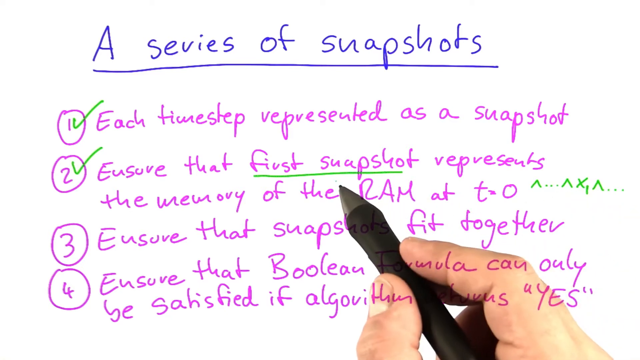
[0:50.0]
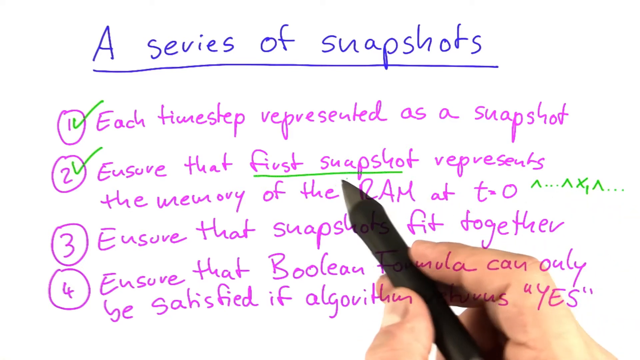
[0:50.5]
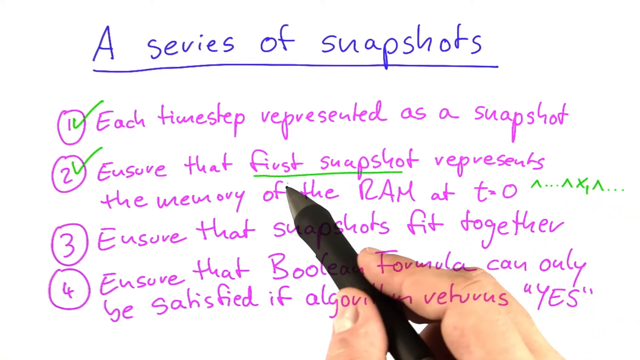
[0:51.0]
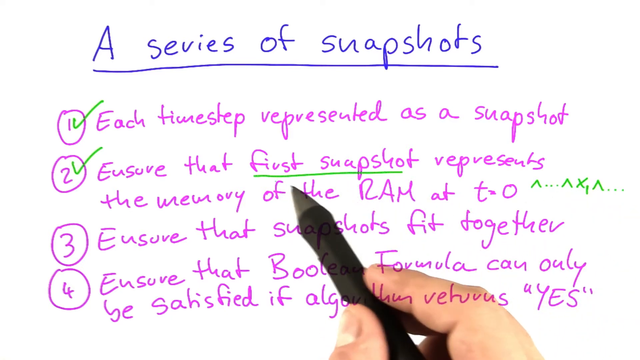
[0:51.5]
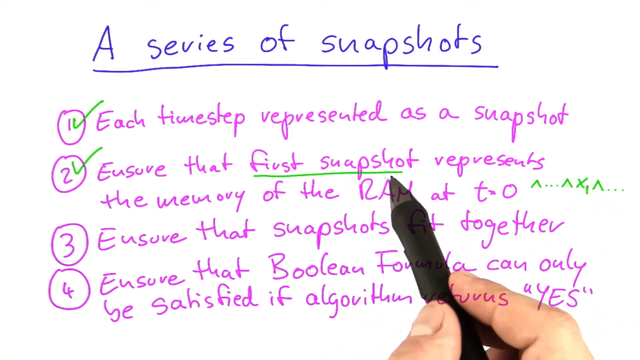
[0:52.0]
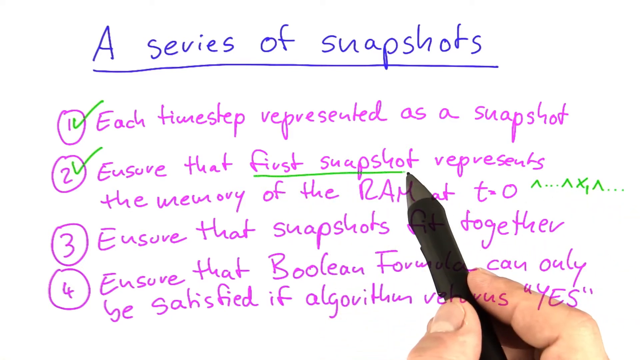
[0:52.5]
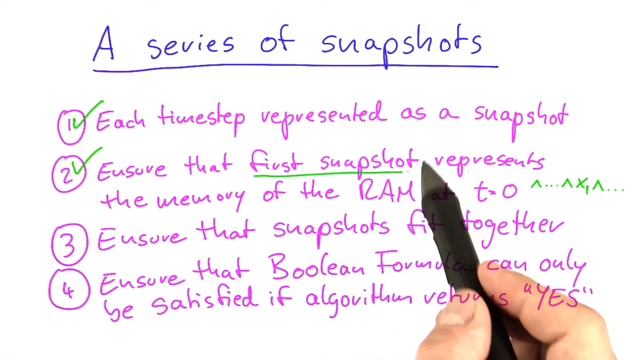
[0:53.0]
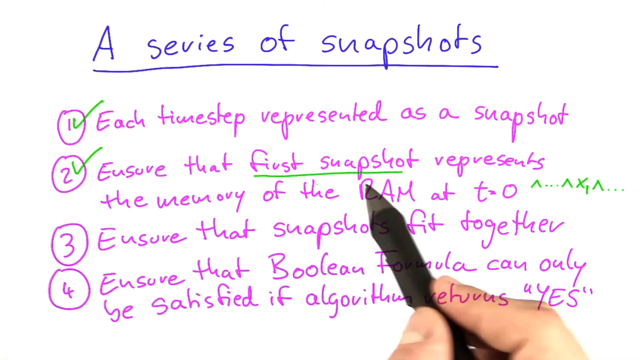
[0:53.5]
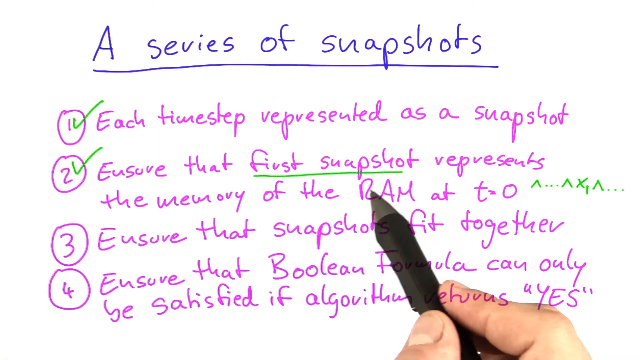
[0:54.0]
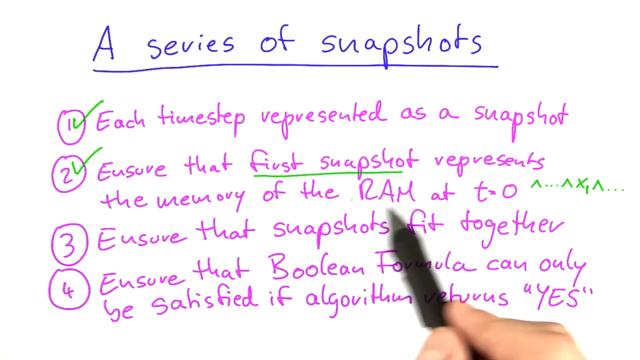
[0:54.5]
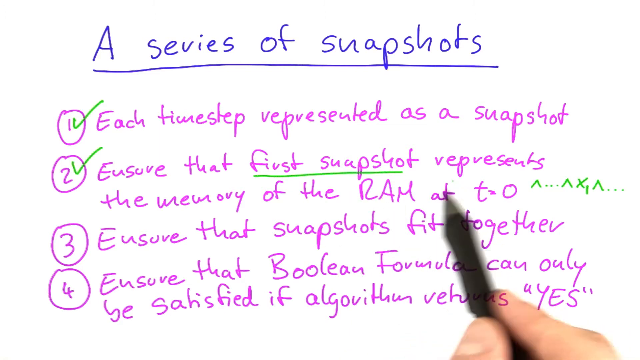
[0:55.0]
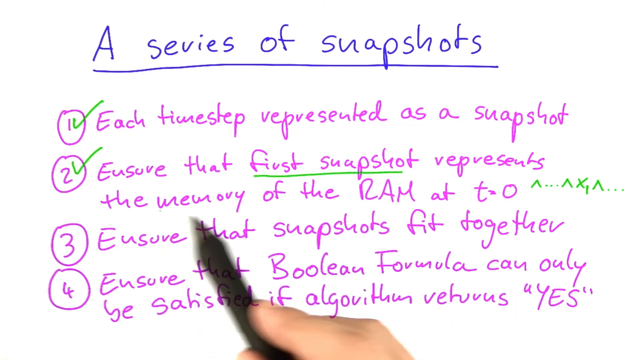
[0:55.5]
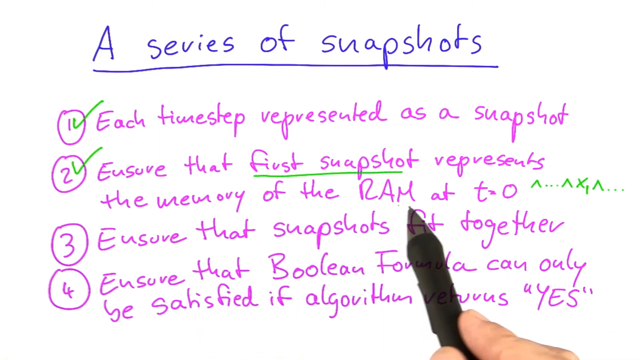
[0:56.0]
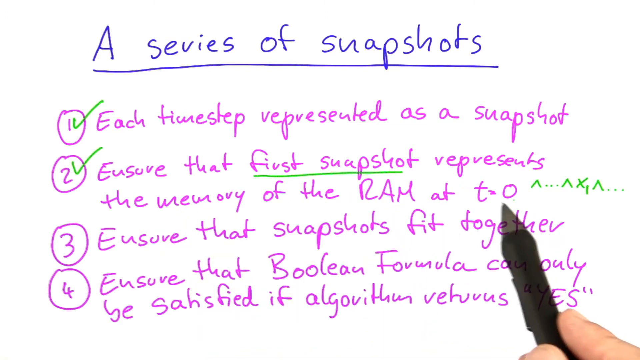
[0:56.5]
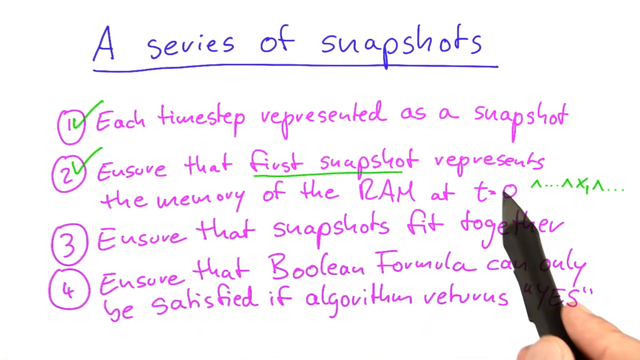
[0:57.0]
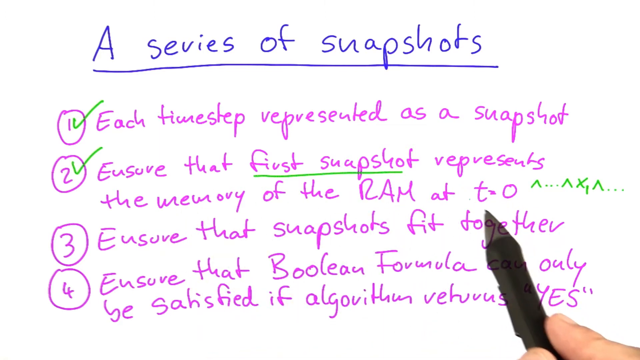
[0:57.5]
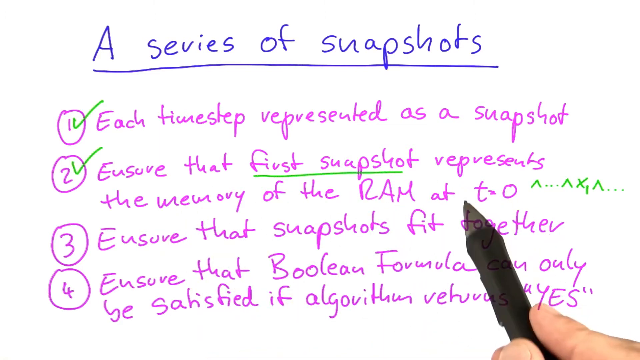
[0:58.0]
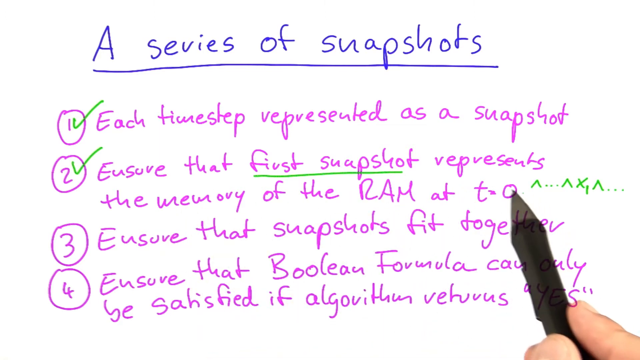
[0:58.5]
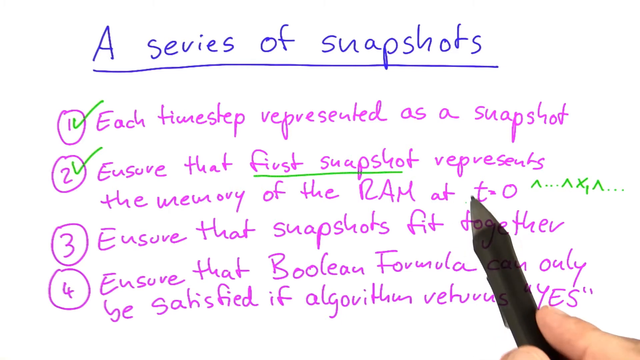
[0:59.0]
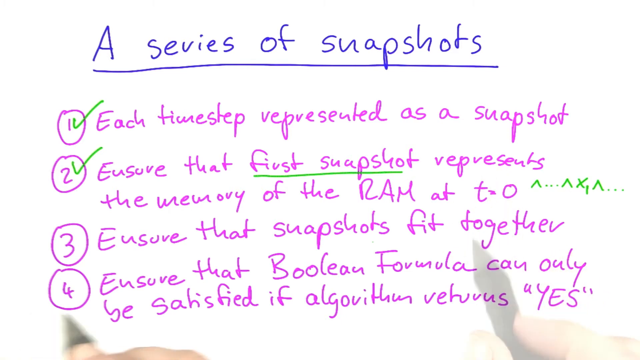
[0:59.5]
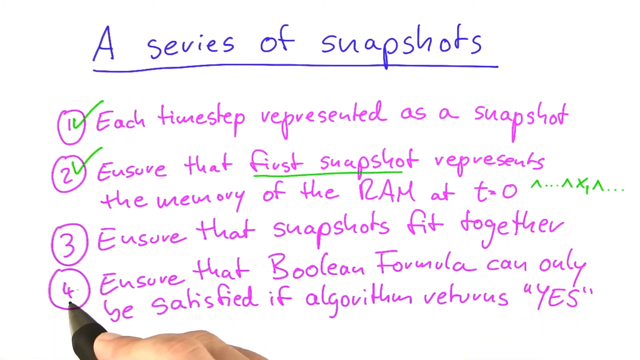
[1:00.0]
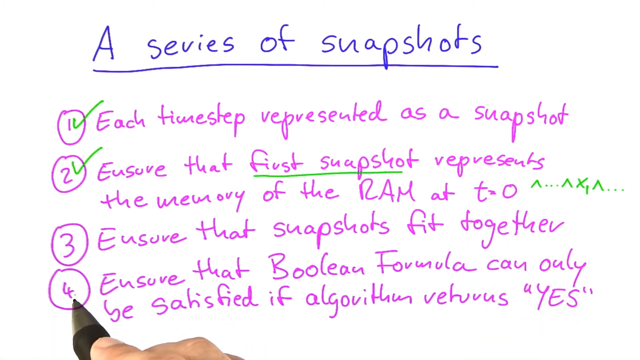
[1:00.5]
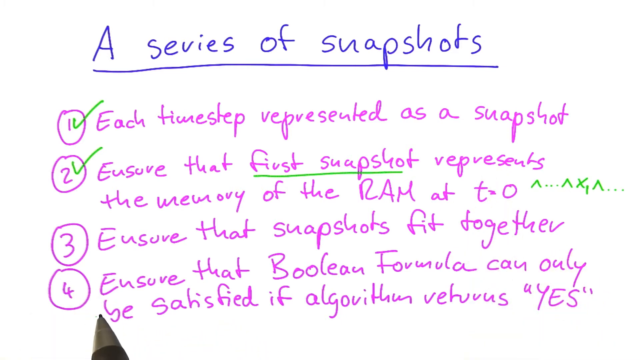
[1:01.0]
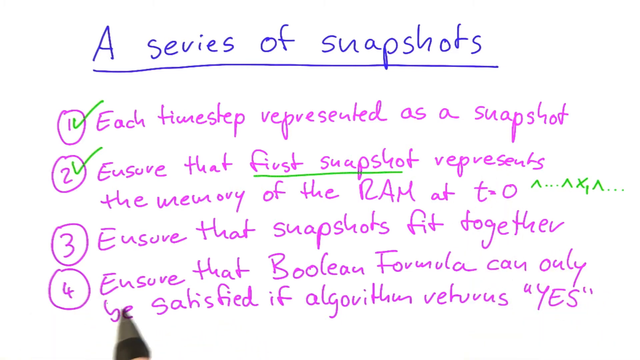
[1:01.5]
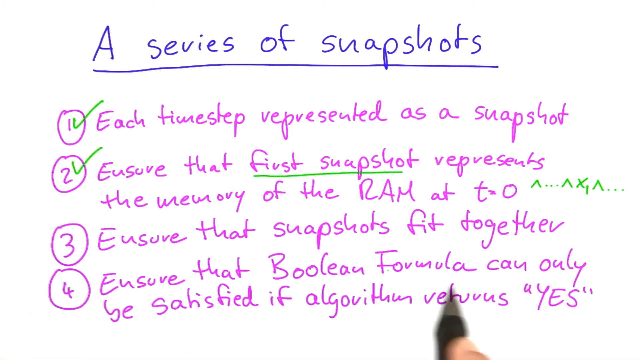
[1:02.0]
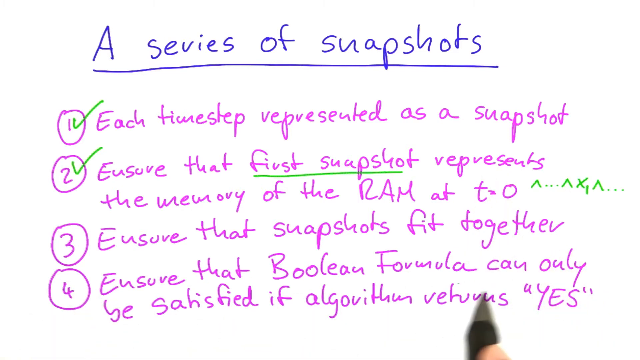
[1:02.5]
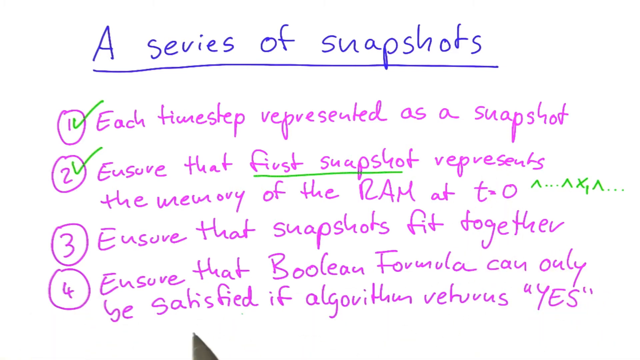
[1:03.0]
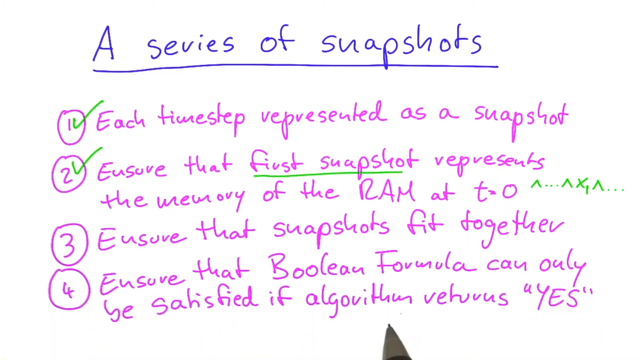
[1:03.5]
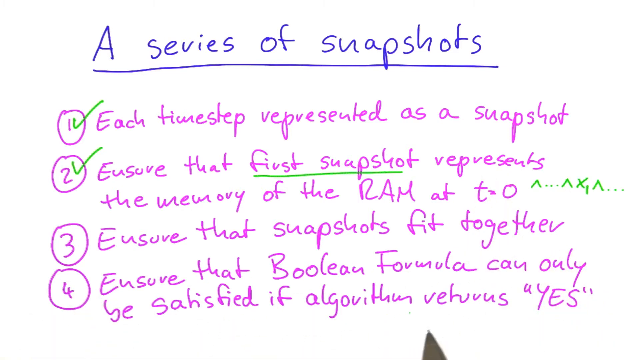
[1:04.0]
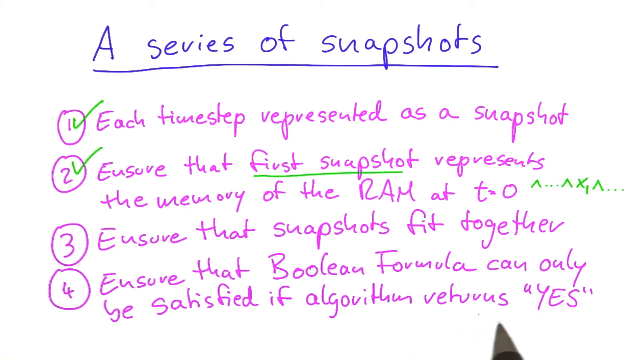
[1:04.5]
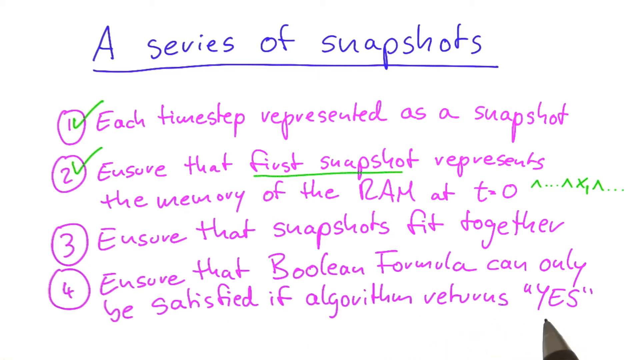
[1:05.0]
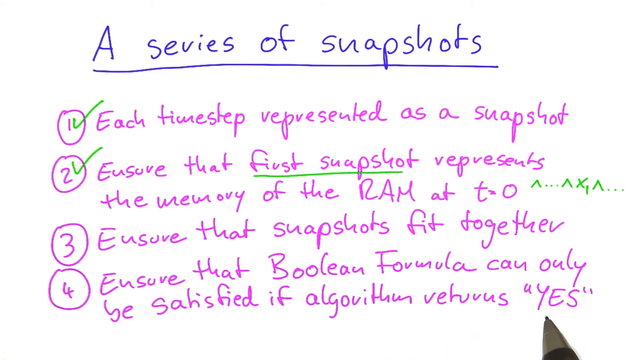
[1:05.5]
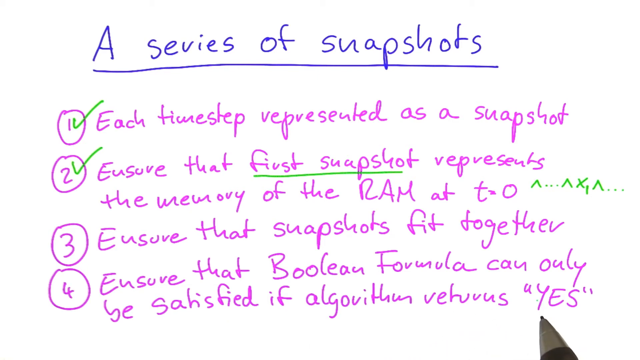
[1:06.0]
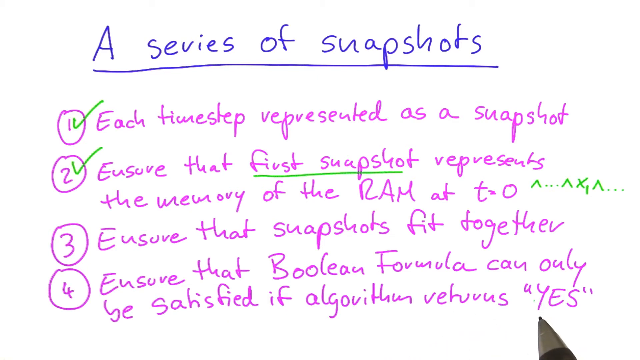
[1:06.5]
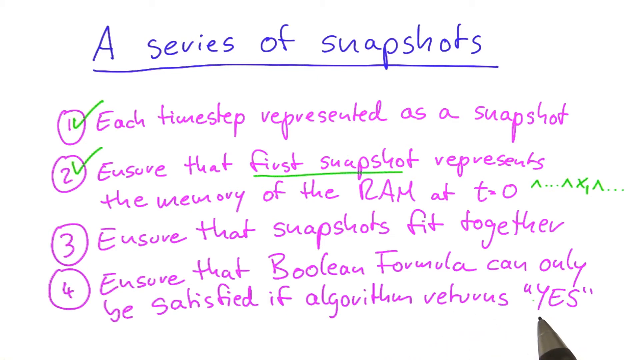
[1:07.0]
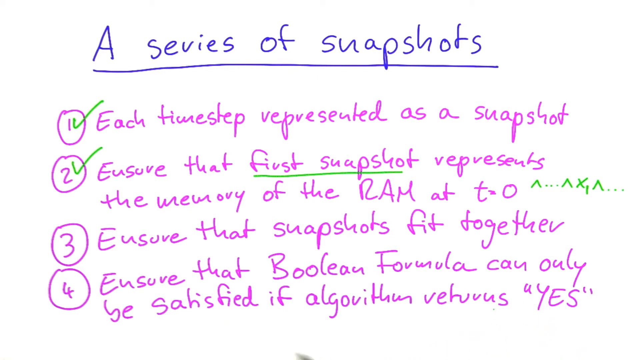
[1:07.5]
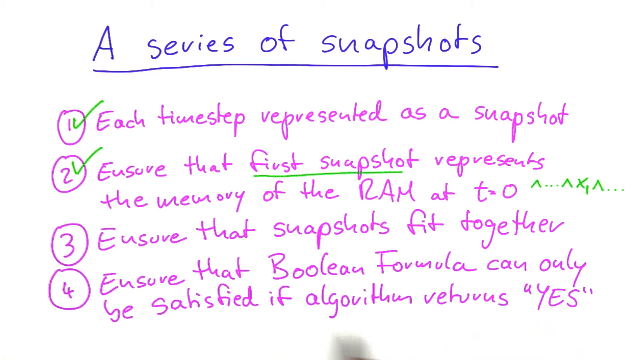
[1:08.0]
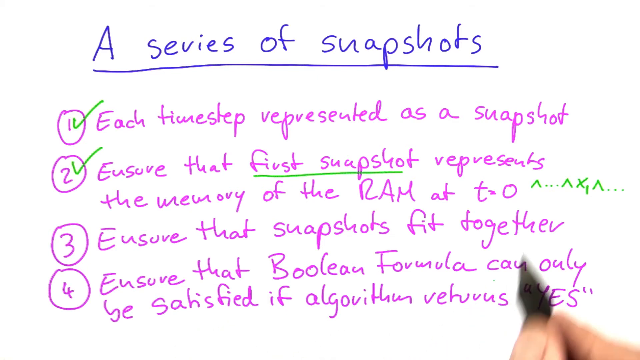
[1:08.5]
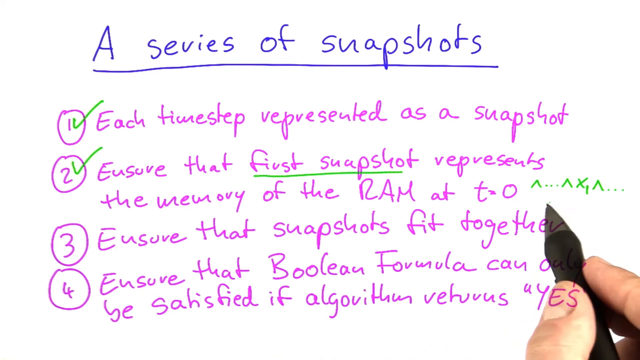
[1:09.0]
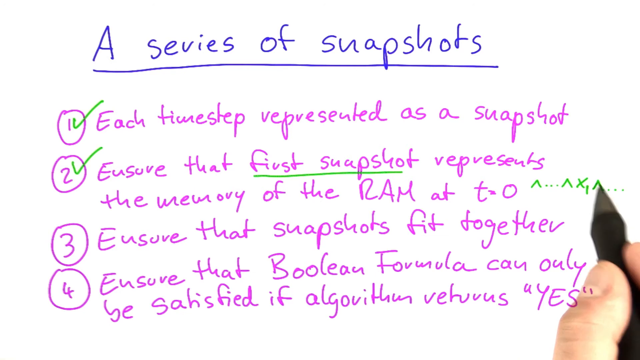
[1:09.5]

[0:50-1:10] The person focuses on sentence number two, writing a small exponent sign on it in green and underlining the words "first snapshot." Sentences one and two are both ticked in green. Sentences one through four are written in pink, and the topic reads "a series of snapshots" in blue. The quality is still high. The person holds a pen in his right hand; the pen is red, but the writing appears in pink, blue and green, with another line in green. Everything is written on a white board, and he appears to be using a computer, laptop or desktop to write the sentences.